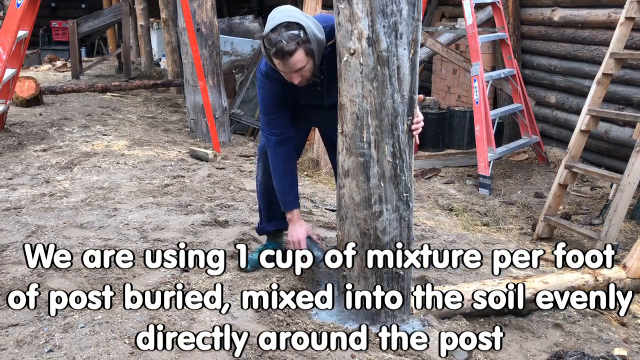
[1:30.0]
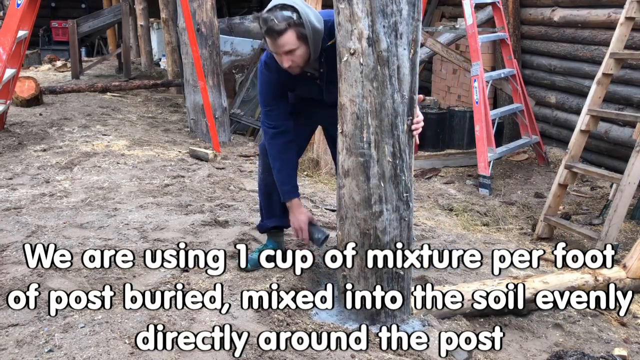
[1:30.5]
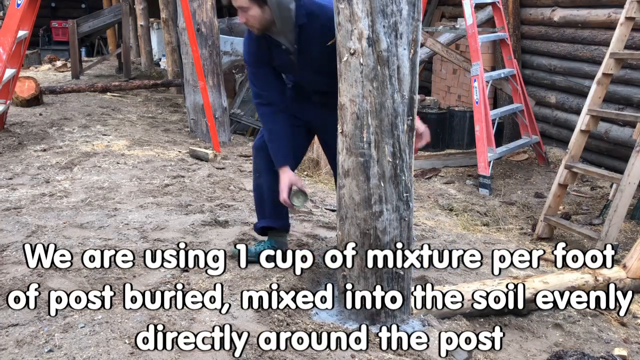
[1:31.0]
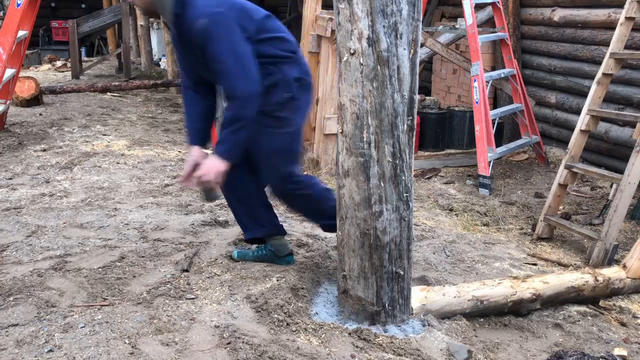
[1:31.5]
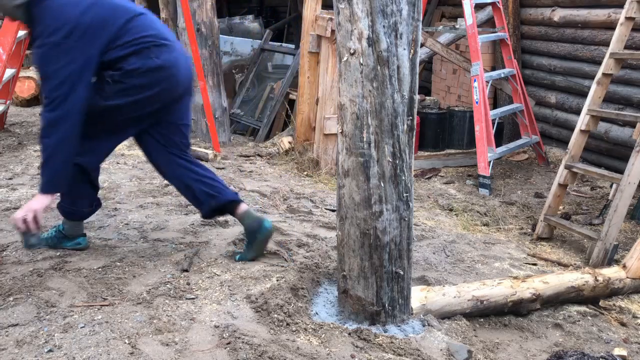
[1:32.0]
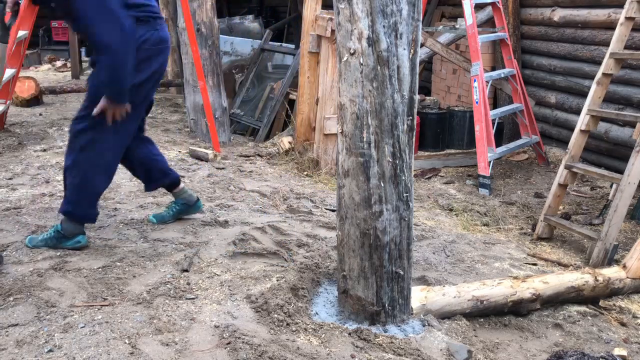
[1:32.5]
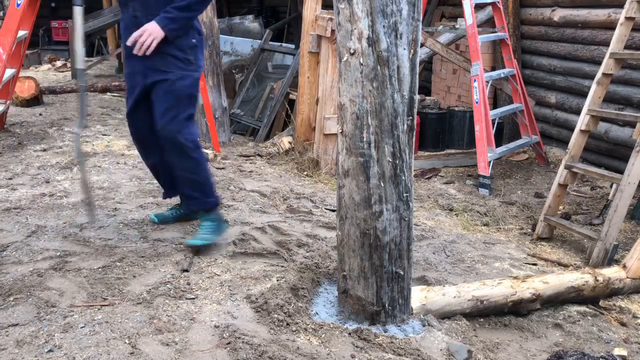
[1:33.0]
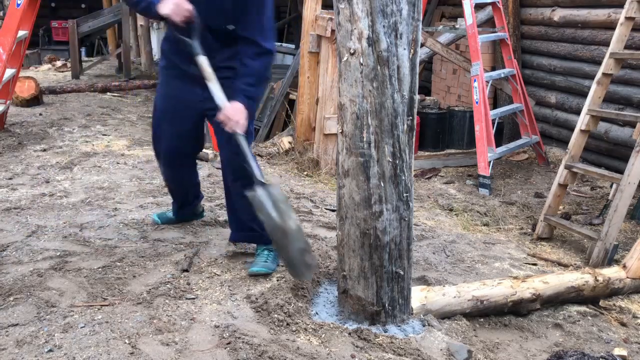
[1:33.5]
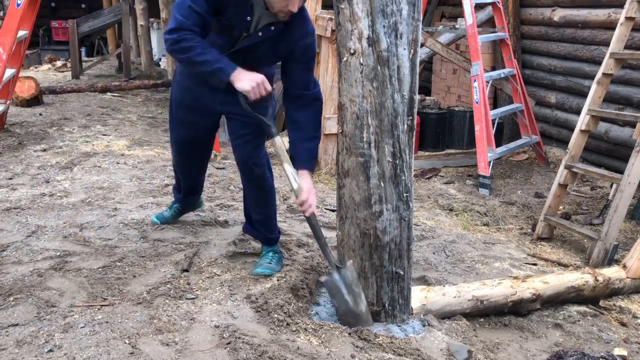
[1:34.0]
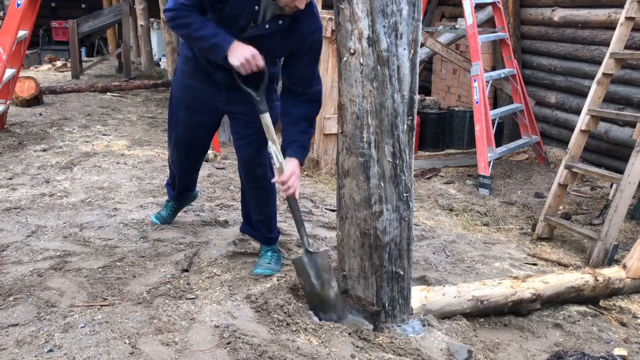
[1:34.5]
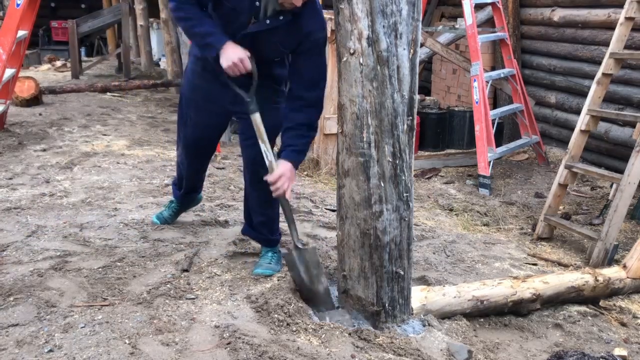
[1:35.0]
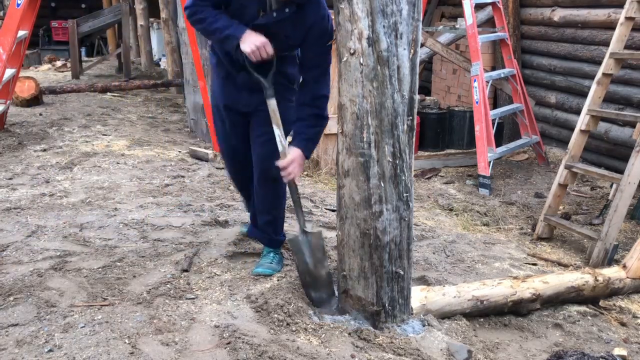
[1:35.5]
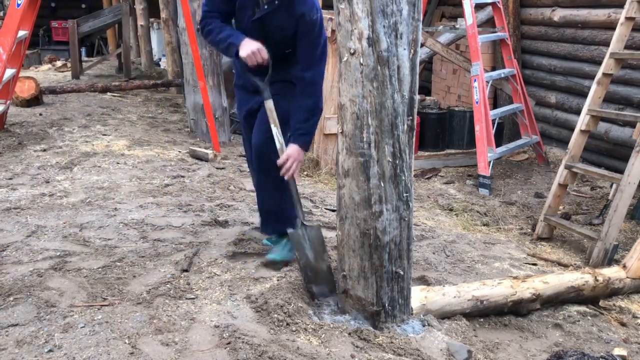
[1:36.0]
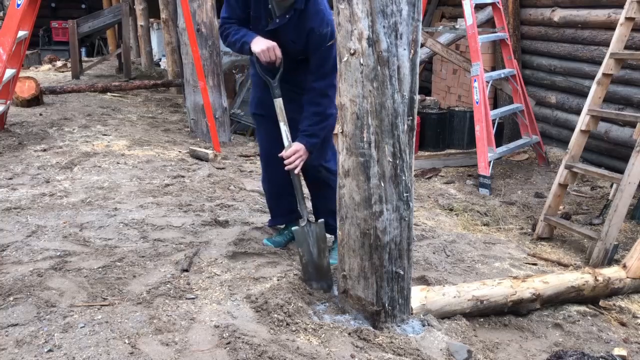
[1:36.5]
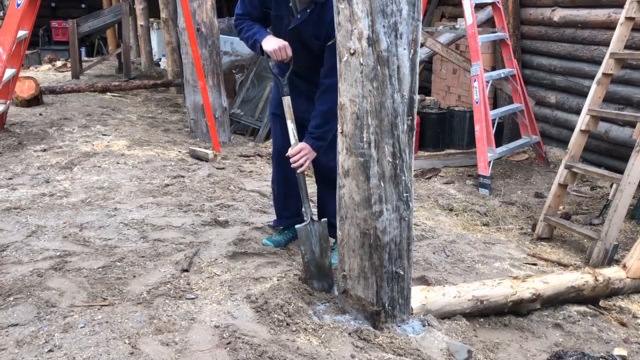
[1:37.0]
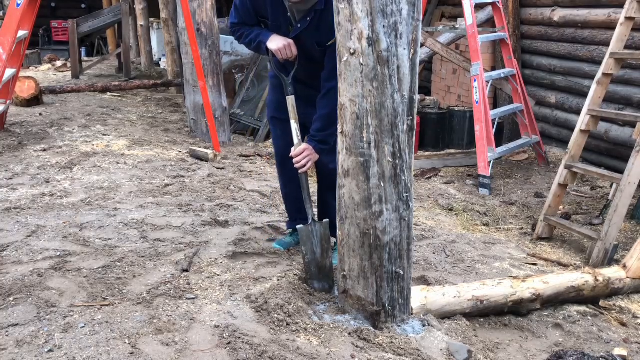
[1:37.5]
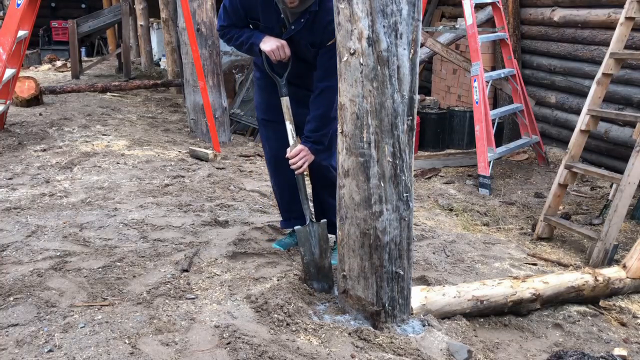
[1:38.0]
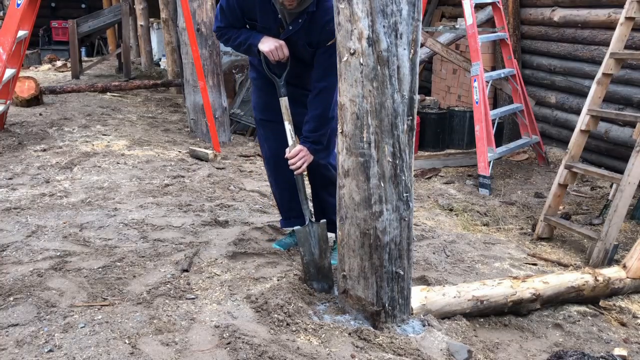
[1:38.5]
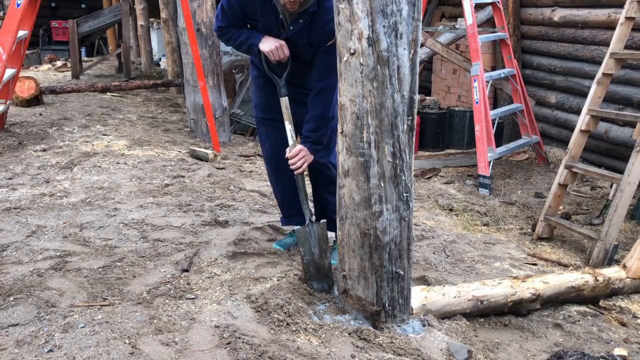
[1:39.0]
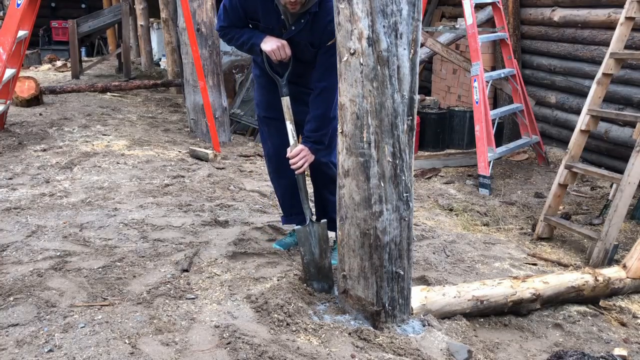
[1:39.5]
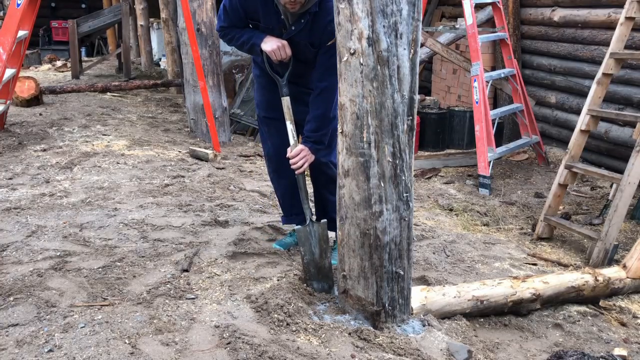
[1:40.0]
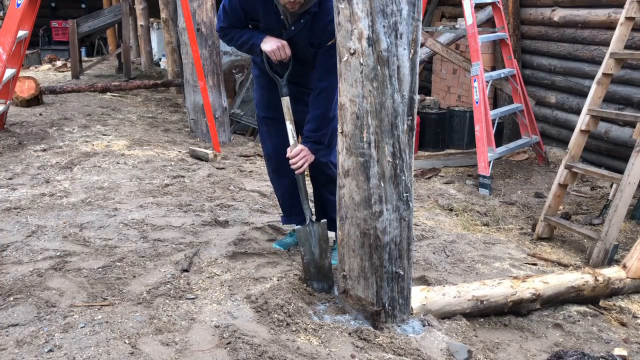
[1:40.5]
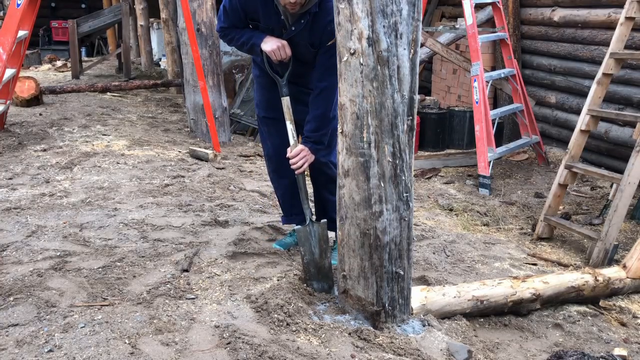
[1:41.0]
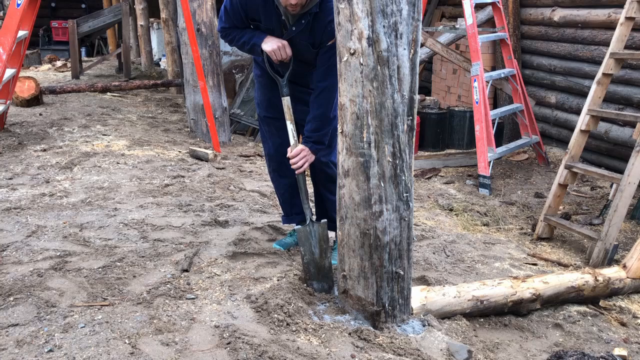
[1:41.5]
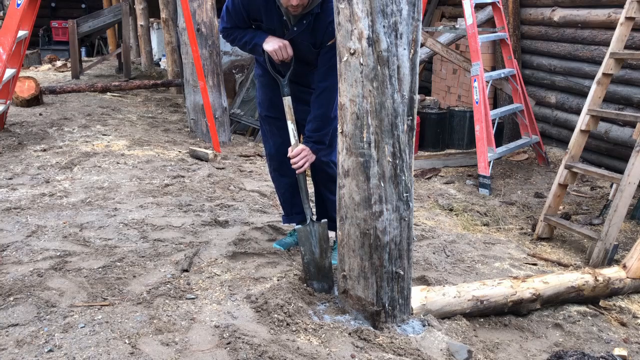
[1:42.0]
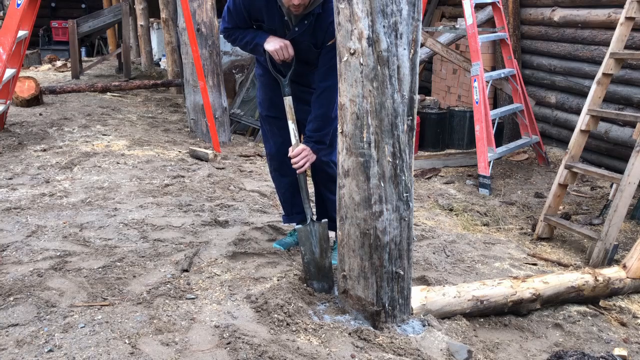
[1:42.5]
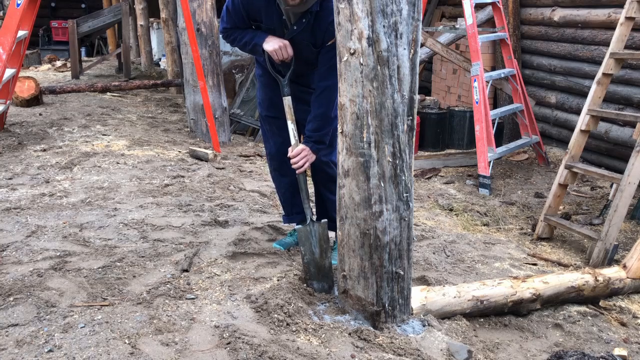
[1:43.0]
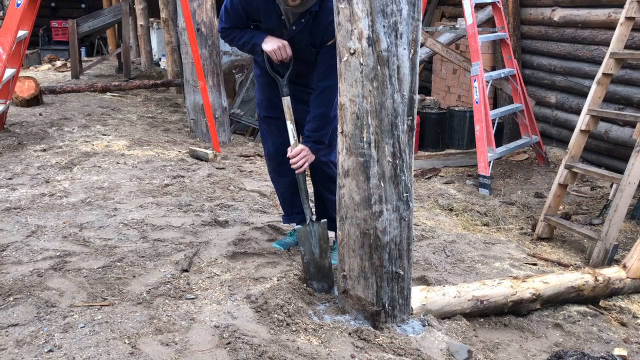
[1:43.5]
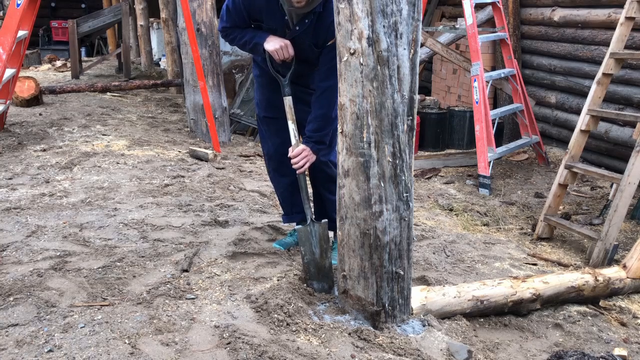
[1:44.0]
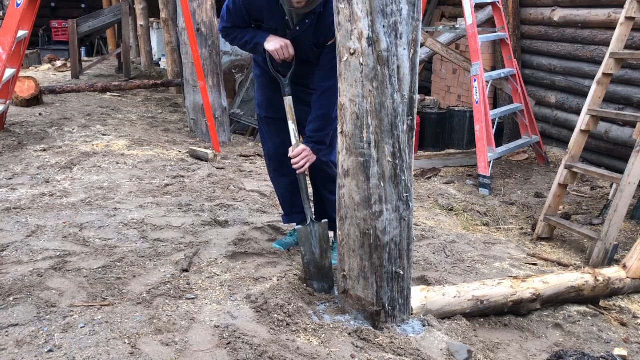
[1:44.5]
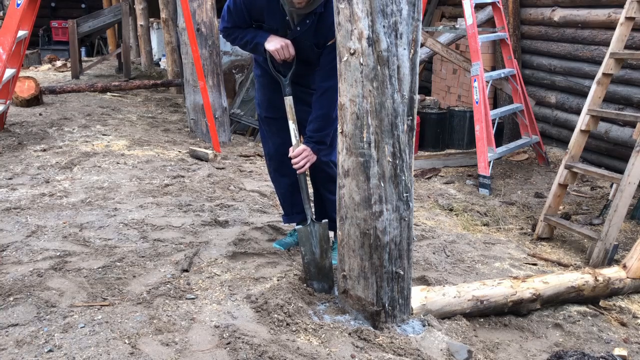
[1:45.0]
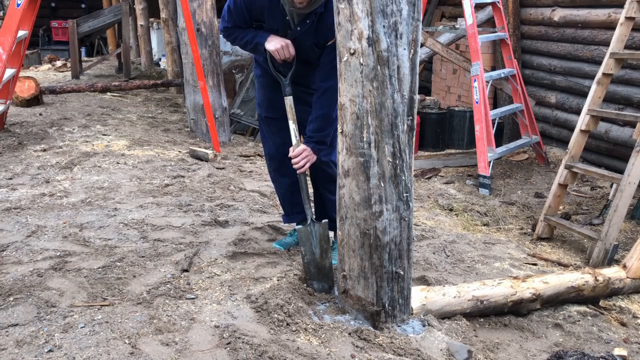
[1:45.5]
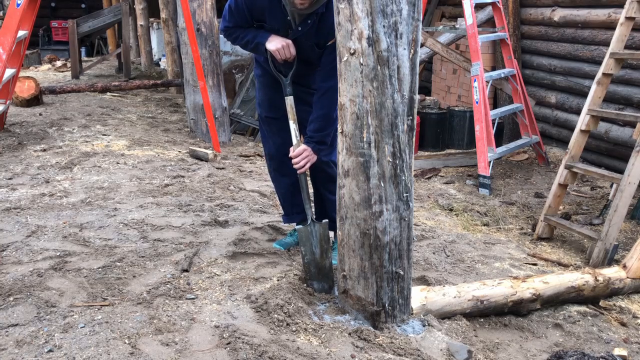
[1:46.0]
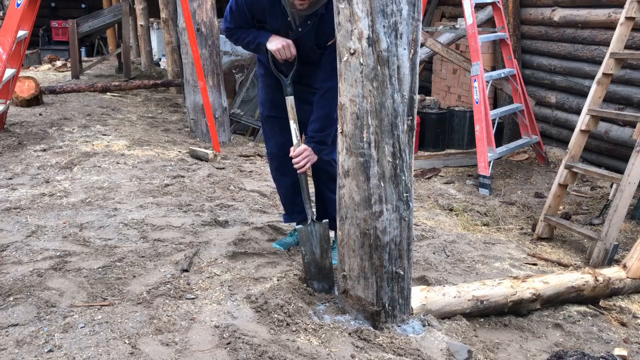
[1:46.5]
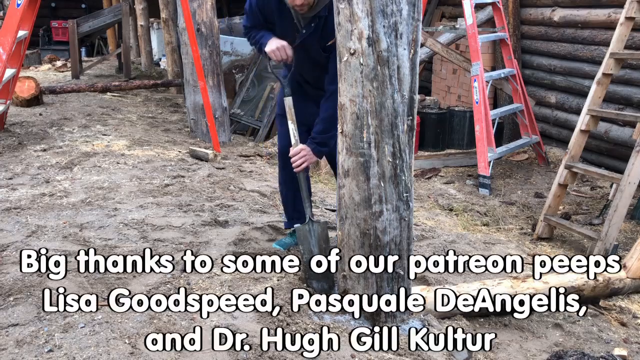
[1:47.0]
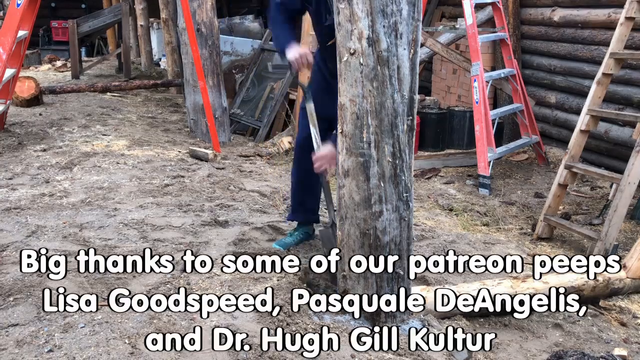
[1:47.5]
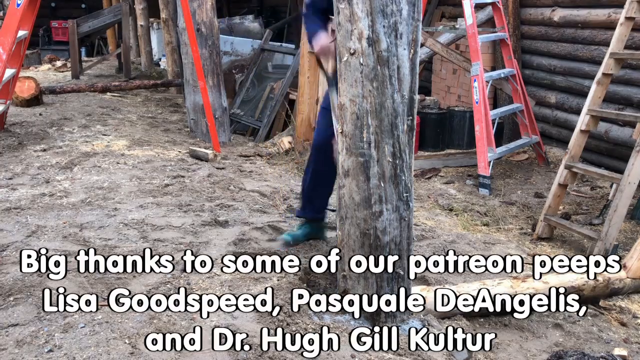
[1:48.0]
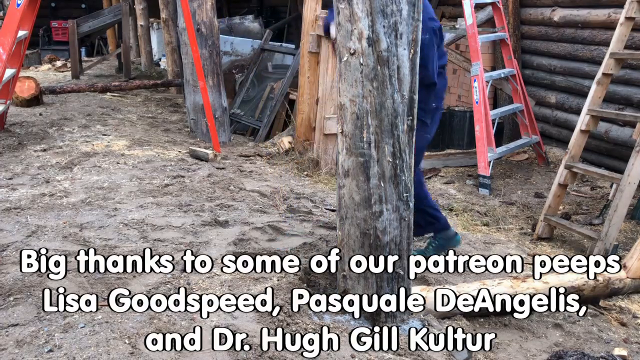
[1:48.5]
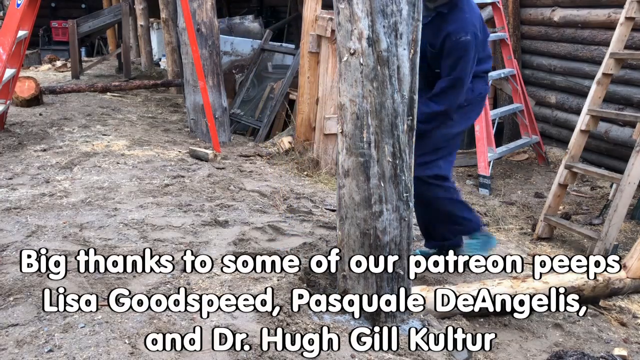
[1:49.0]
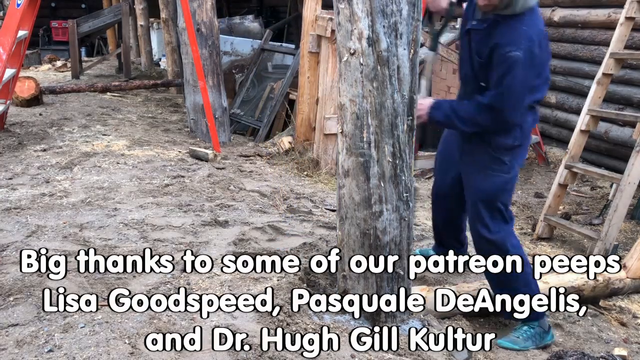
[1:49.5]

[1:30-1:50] A man stands next to a large wooden post buried in the ground. He holds onto the post with his left hand and, with his right hand, shakes a white powder mixture from a metal cup around the base of the post. He then moves the cup to his right hand, walks off screen to the left, and places the cup on the ground. He grabs a shovel and begins working the powder into the soil around the base of the post. As he does this, his face is partly obscured at the top of the screen, but his mouth can be seen moving as though he is talking and explaining what he is doing. At the beginning, a caption at the bottom of the screen reads, "We are using 1 cup of mixture per foot of post buried, mixed into the soil evenly directly around the post." Later, as he shovels around the base of the post, new text appears reading, "Big thanks to some of our Patreon peeps Lisa Goodspeed, Pasquale DeAngelis, and Dr. Hugh Gill Kultur."